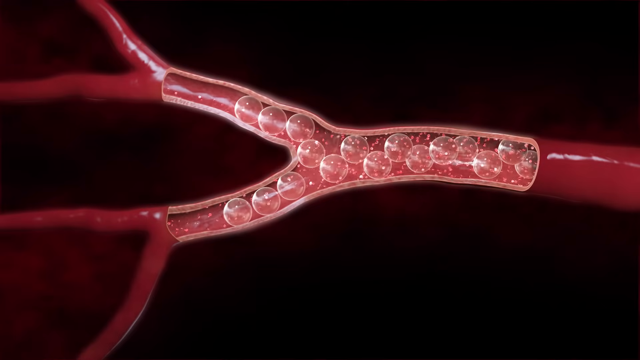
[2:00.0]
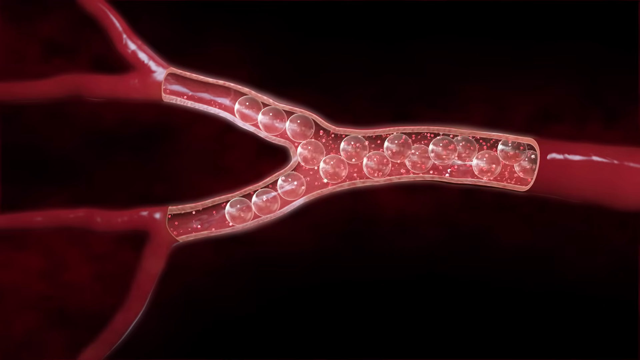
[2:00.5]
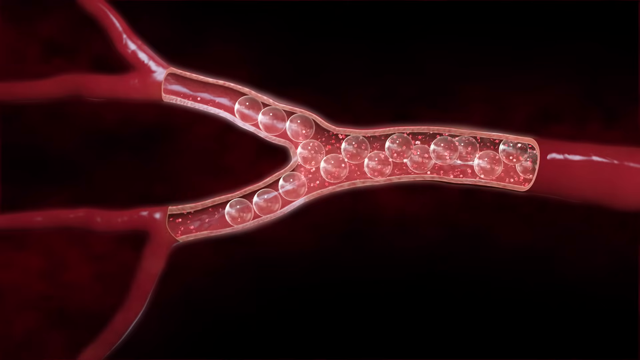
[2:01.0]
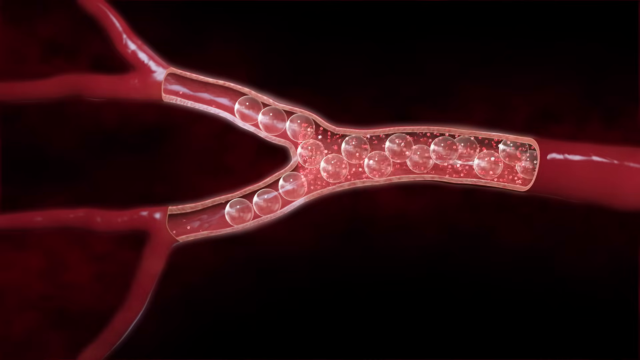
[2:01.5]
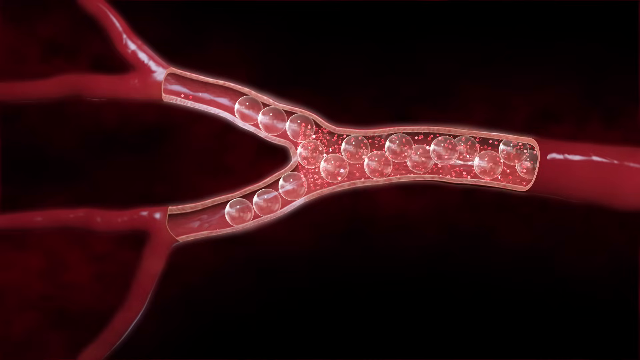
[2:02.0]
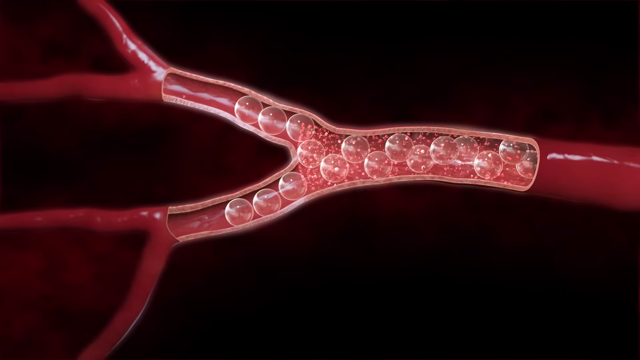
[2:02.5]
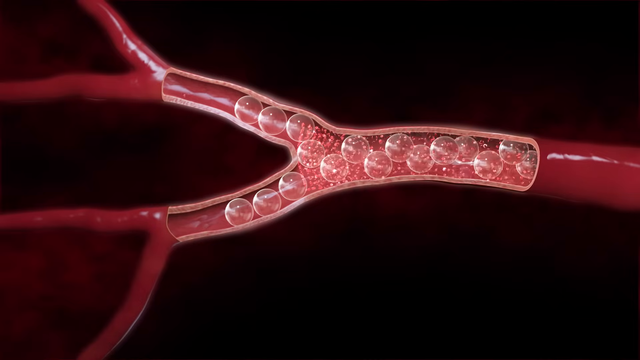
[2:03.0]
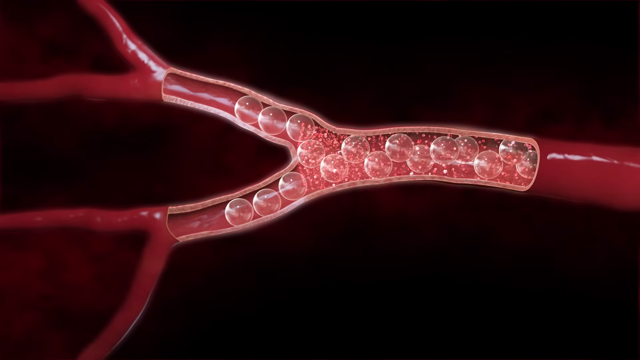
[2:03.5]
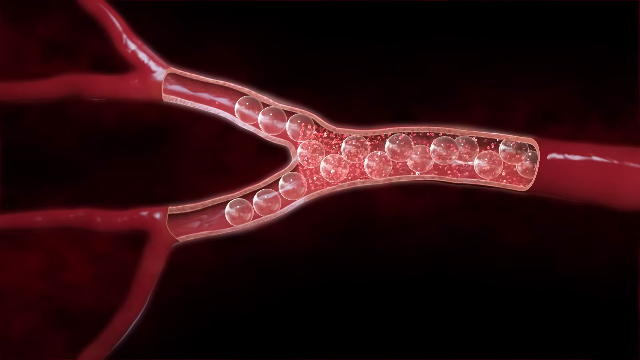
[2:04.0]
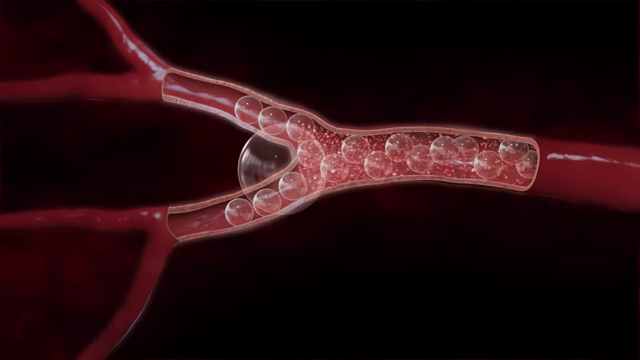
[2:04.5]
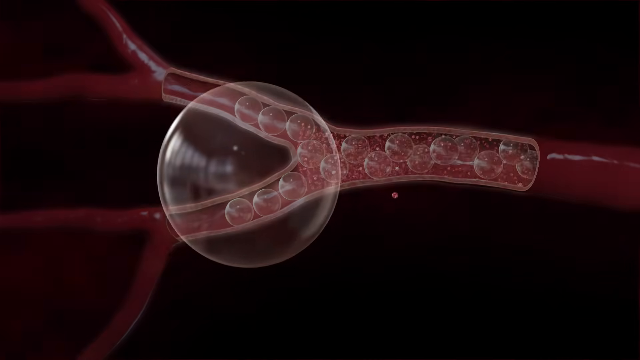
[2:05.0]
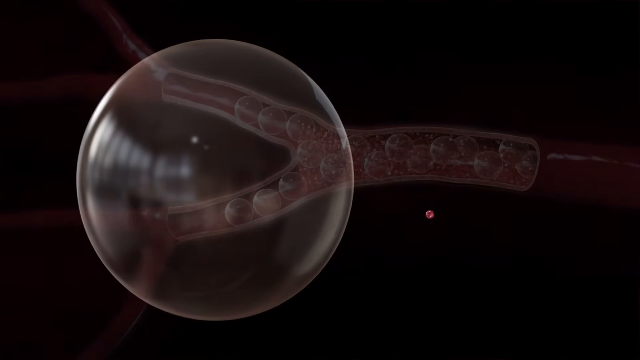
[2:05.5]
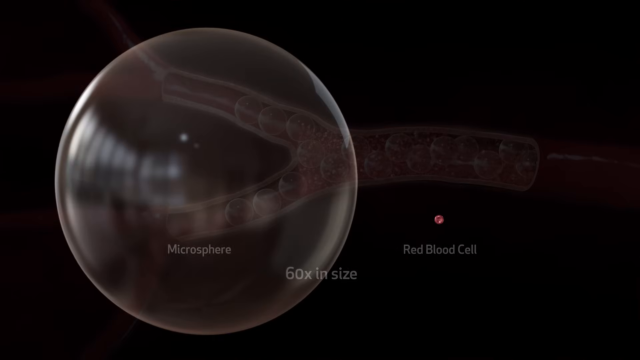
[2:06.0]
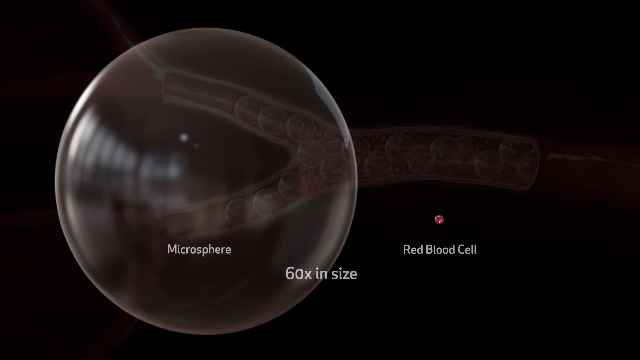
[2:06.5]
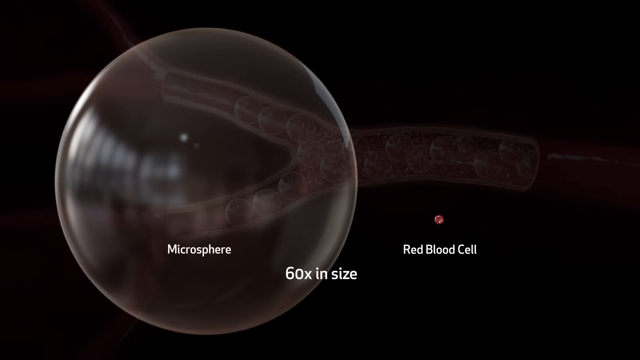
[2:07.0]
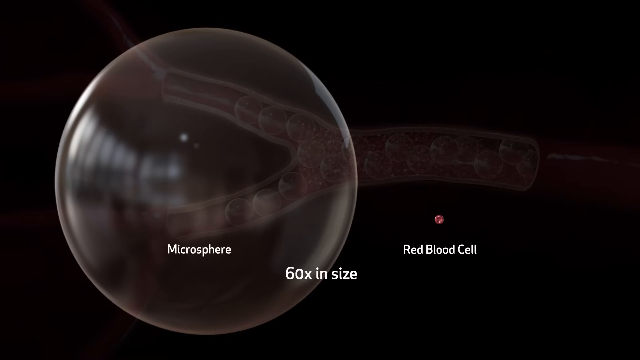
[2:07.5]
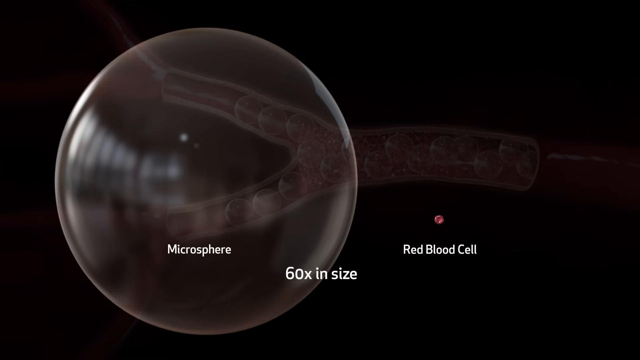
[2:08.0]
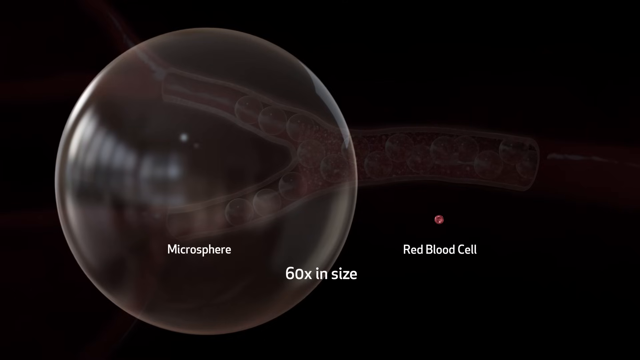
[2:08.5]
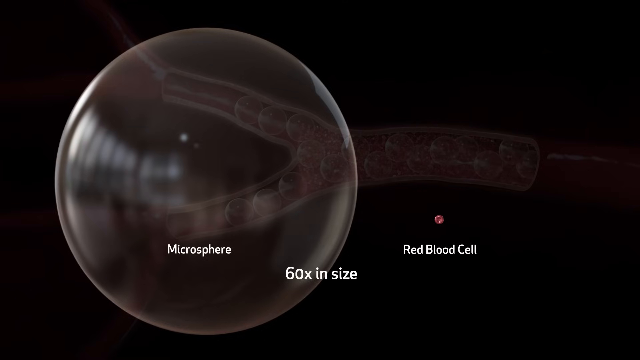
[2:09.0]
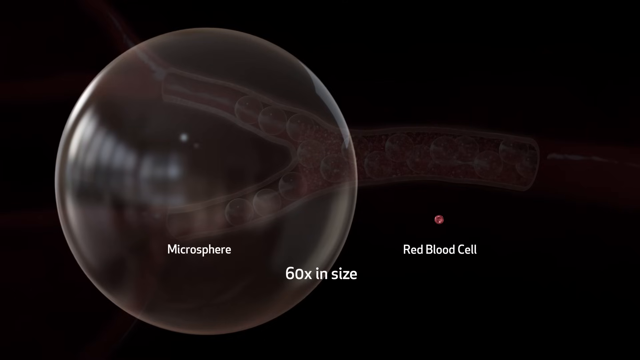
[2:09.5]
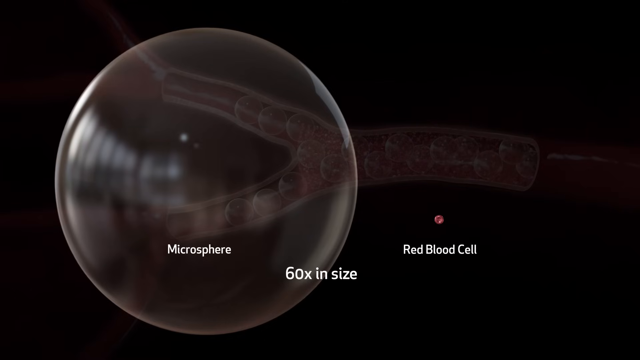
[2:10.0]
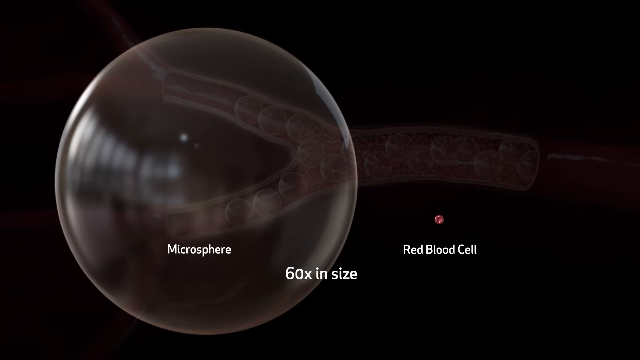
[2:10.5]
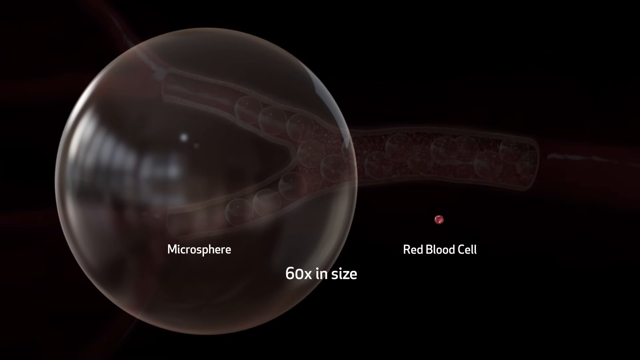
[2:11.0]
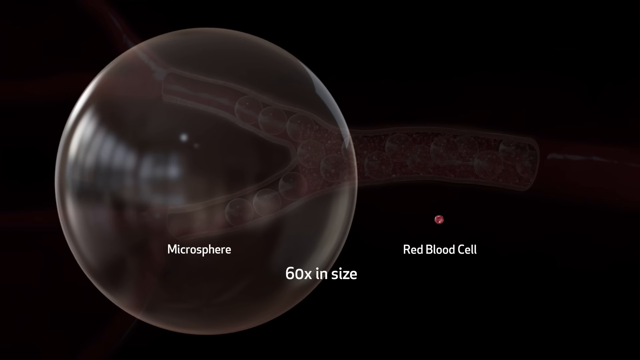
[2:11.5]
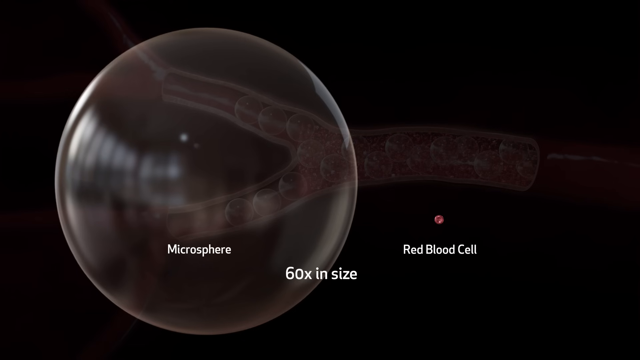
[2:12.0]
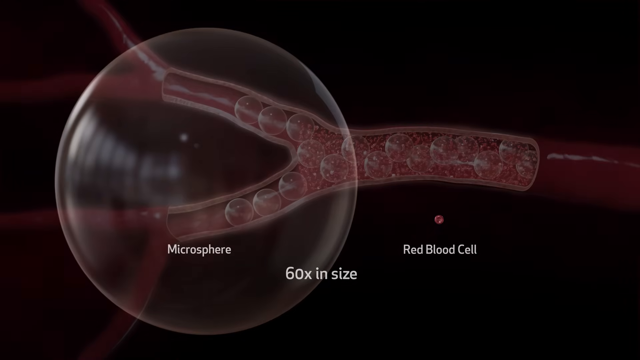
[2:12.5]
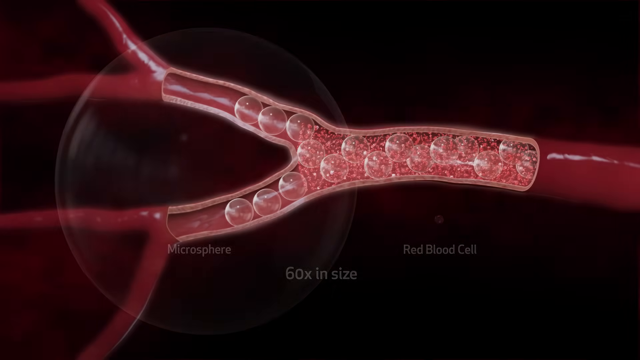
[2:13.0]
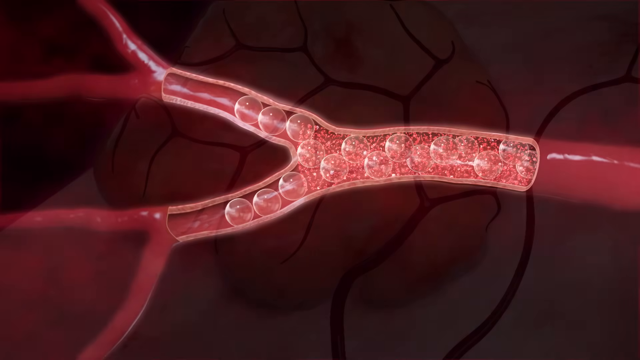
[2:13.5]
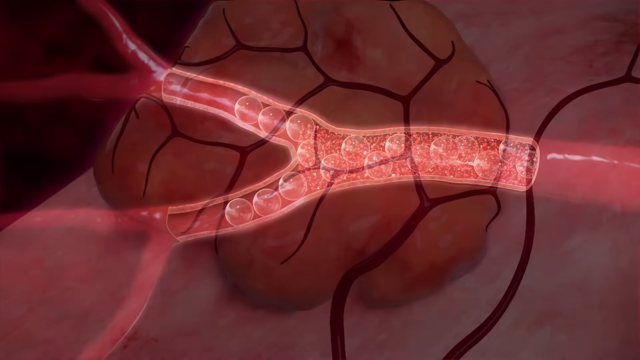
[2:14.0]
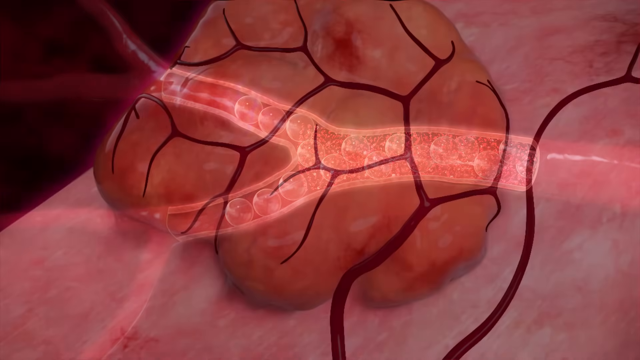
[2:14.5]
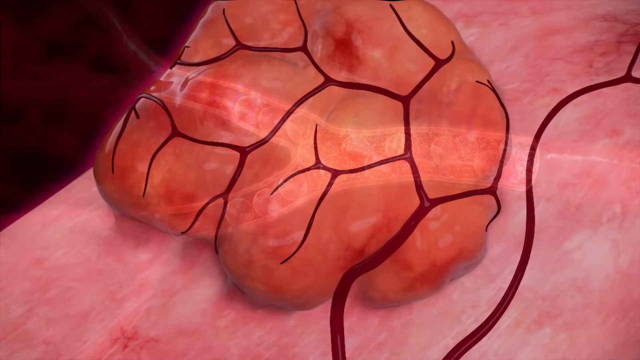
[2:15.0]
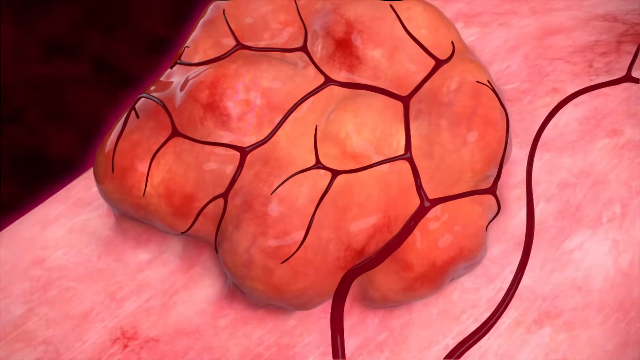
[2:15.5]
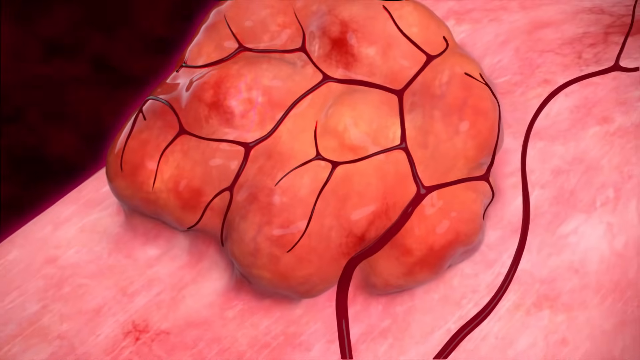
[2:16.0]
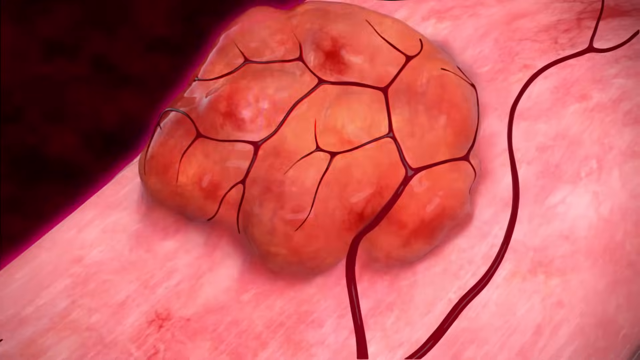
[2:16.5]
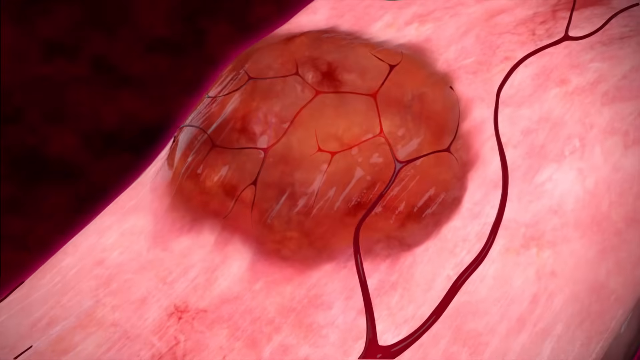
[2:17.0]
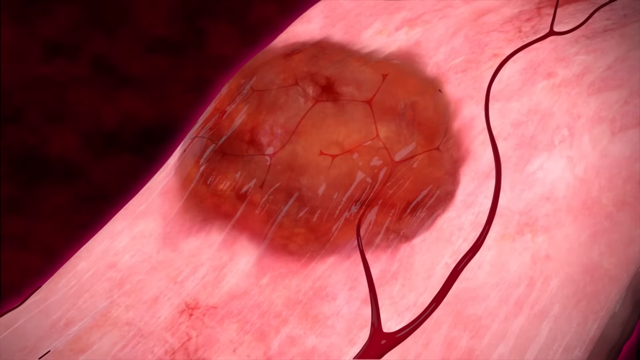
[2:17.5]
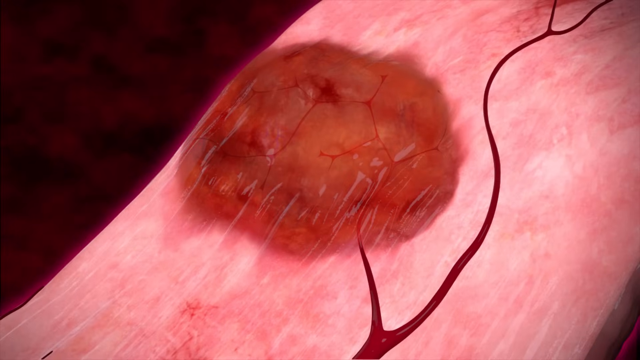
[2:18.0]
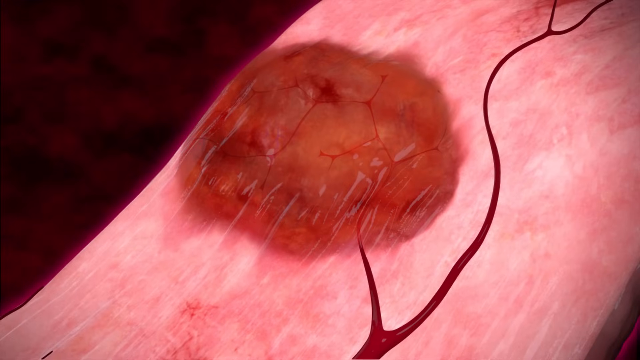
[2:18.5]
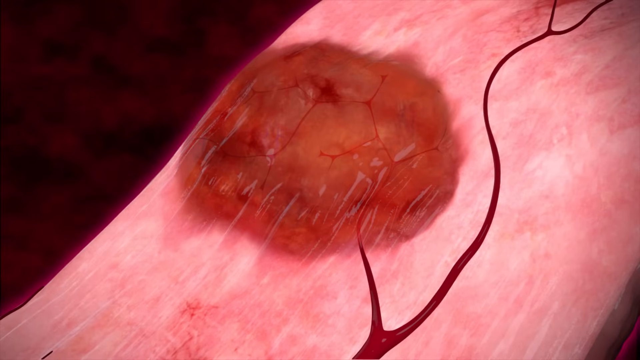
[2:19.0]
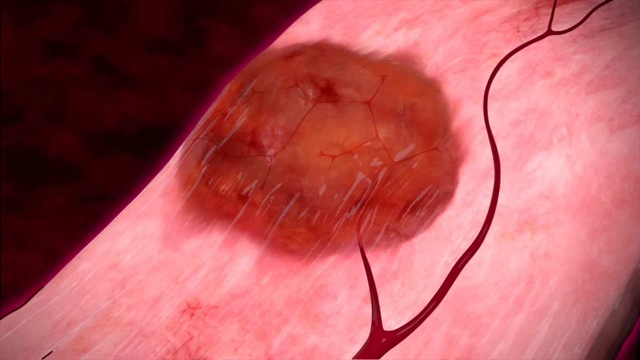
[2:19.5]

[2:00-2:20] A close-up cross-section of a vein shows the medicine, which looks like bubbles, traveling through the vein. A size comparison shows a red blood cell as really tiny bubbles, and a microsphere as 60 times that size; the microspheres are apparently the medicine going into the veins. They look like lots of big bubbles and appear to clog up the vein where it branches into a Y, cutting off the blood supply to the fibroid. With no blood supply, the fibroid shrinks up and dies.